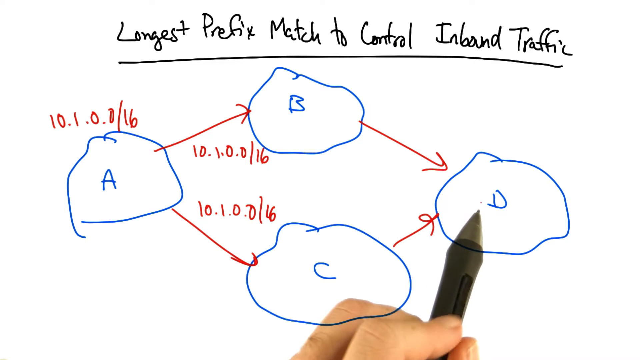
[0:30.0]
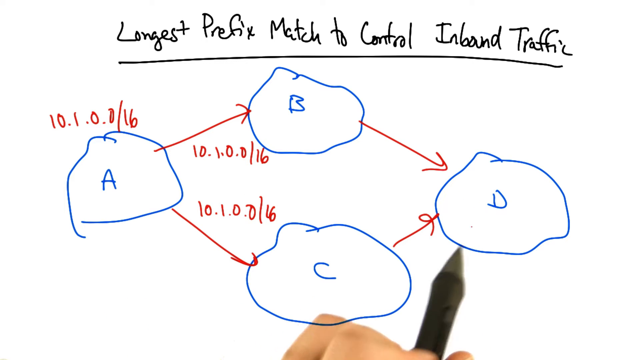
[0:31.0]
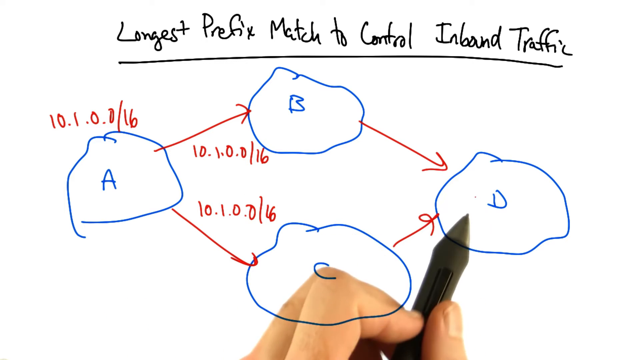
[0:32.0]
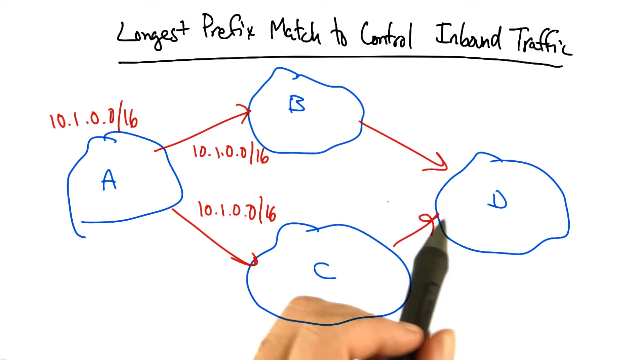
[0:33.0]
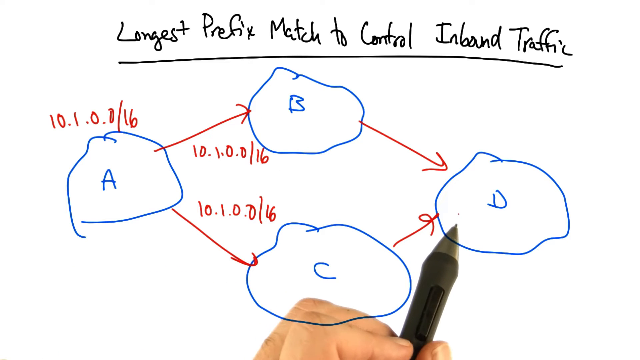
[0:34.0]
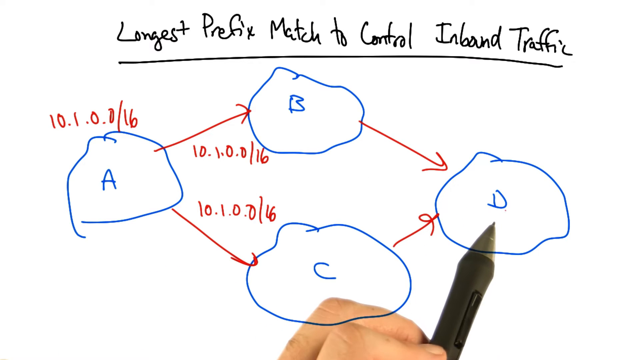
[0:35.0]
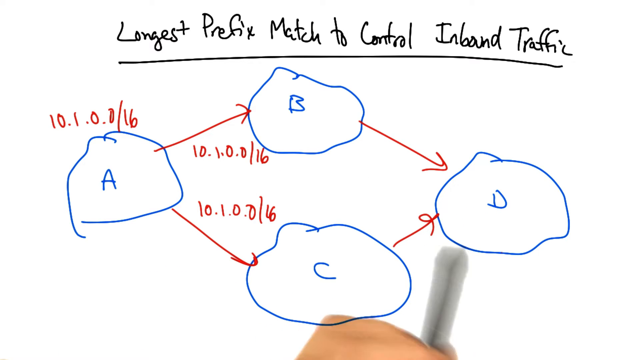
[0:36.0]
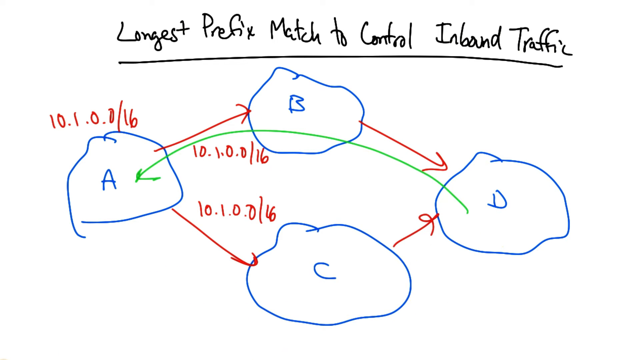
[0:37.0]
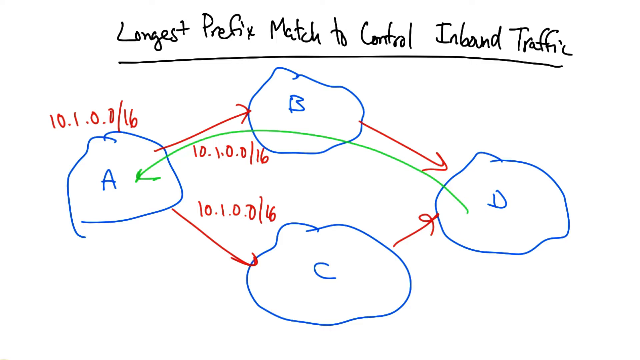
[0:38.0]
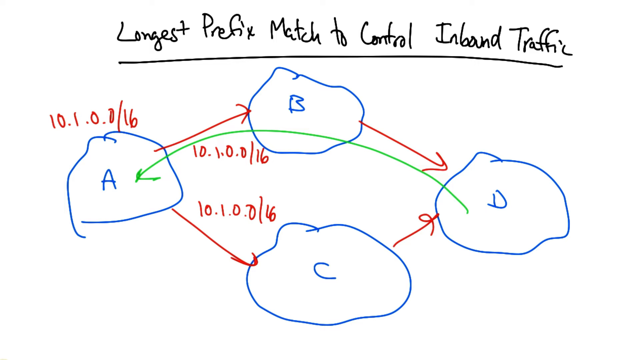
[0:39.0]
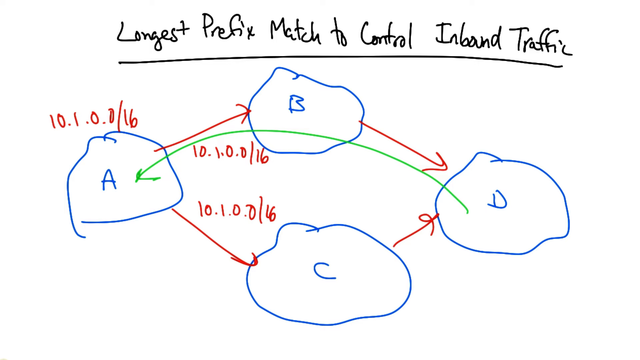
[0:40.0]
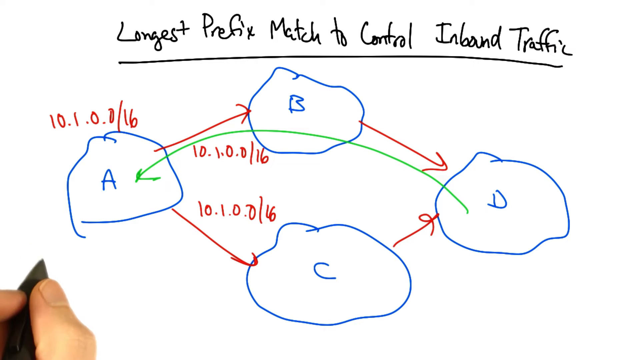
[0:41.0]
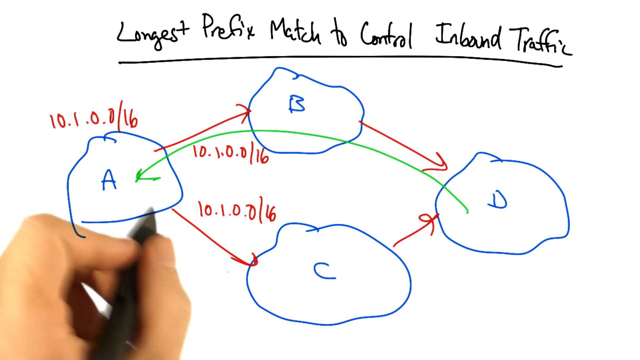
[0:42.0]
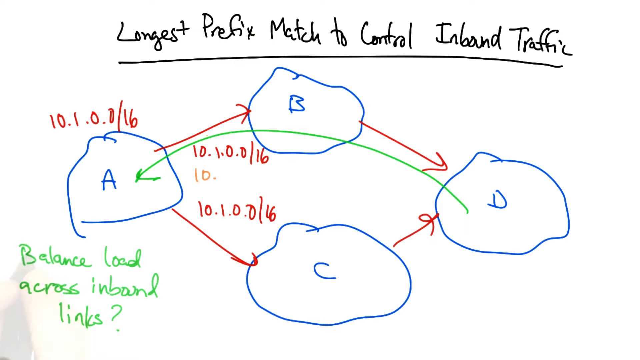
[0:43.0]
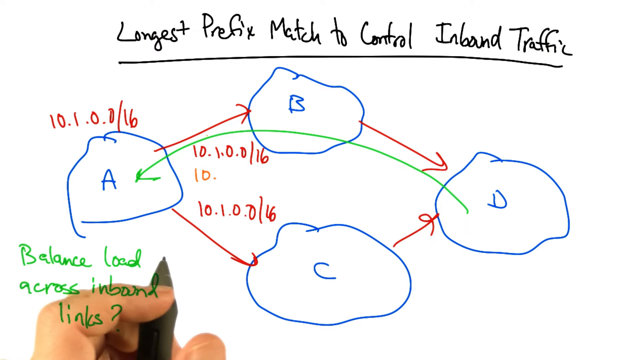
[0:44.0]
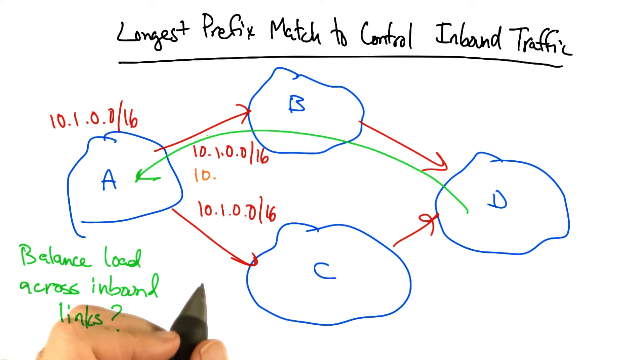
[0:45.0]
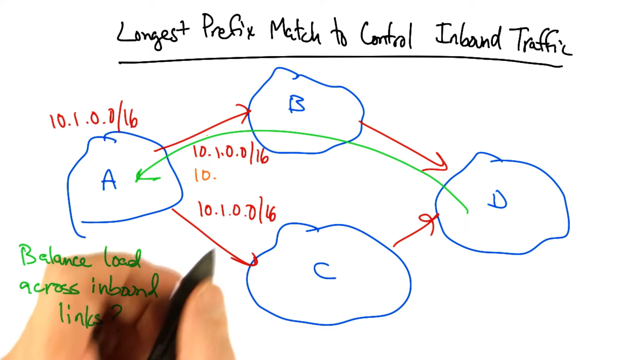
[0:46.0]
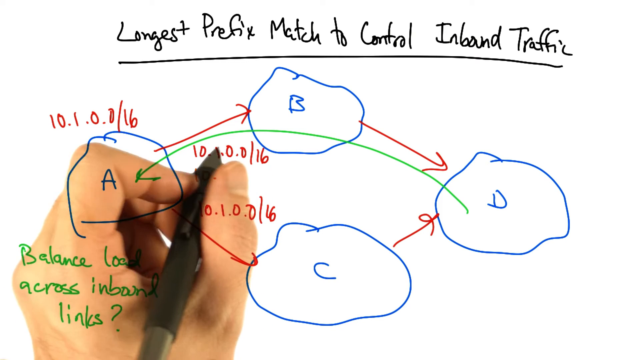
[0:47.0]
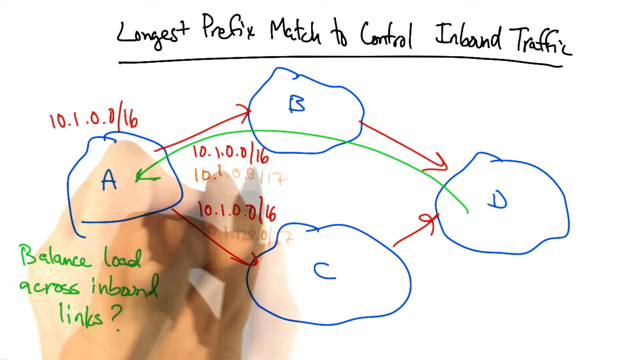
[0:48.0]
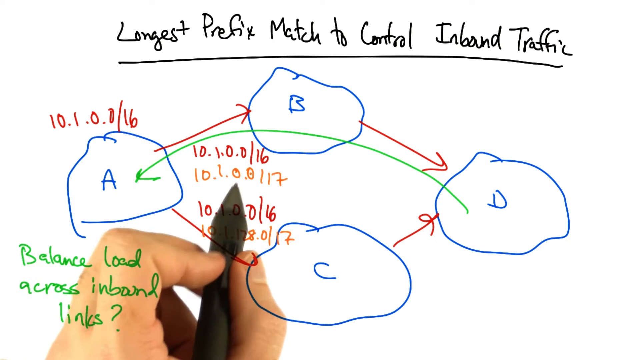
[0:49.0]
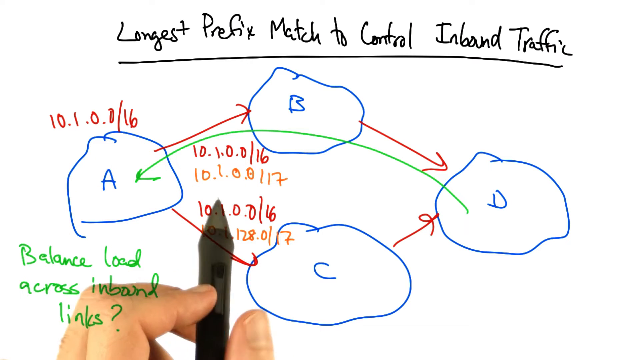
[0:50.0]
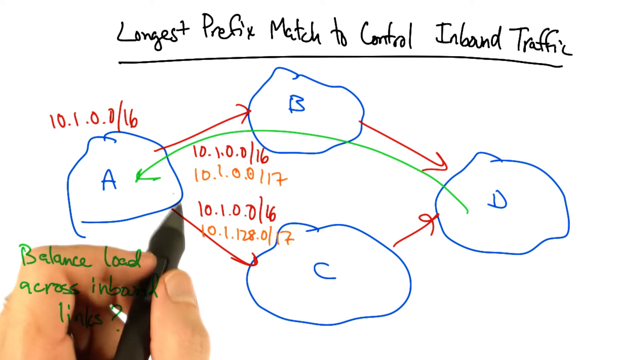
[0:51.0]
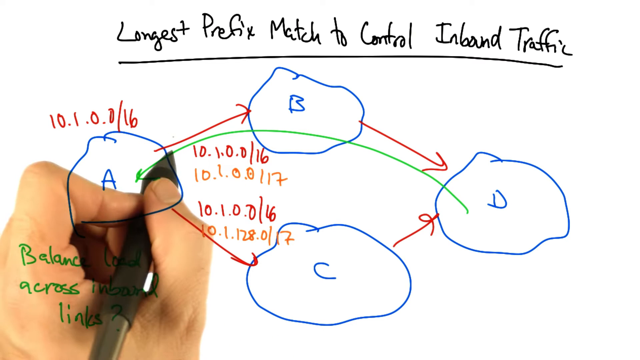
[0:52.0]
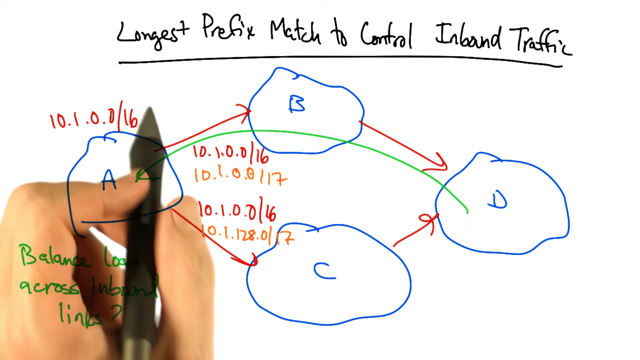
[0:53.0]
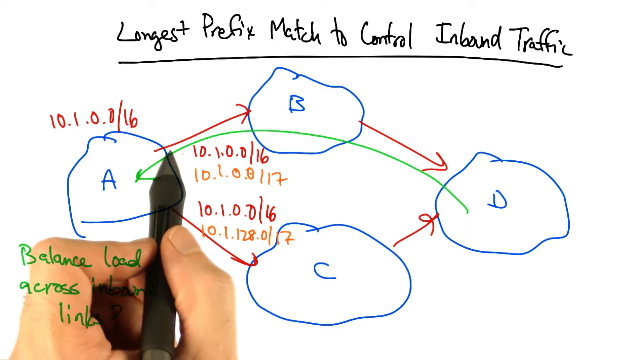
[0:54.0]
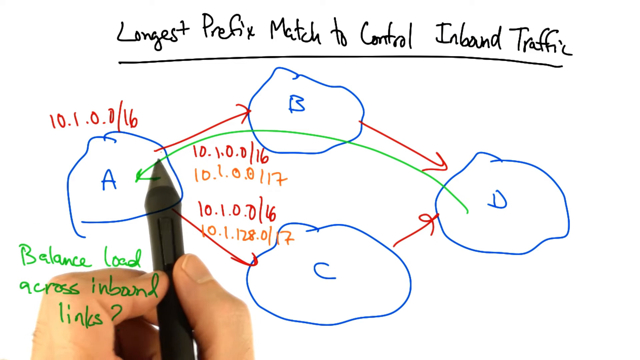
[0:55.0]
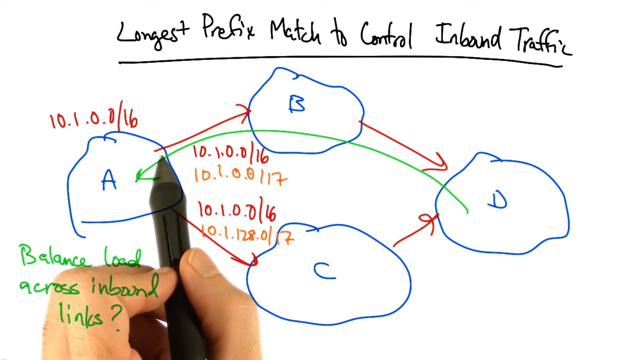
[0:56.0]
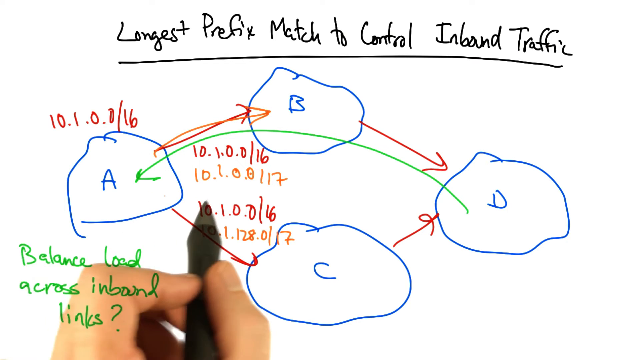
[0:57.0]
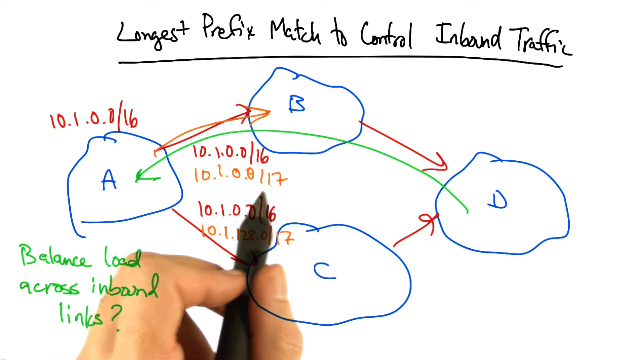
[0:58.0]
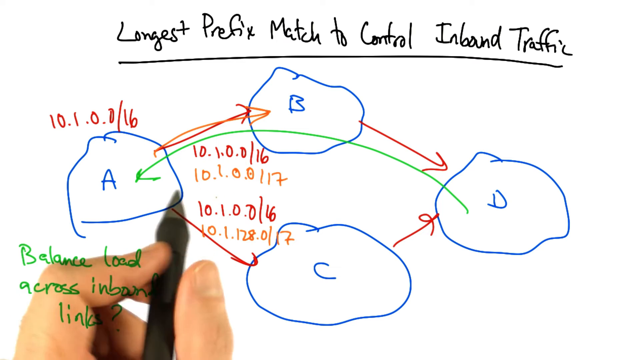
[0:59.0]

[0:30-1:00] The pen points at D. The side of the pointer finger and a little of the middle finger are visible, with the thumb gripping the other side of the black pen; the thumb faces right and the tops of the fingers point up as they grip the back of the pen. The pen moves from D down to C, back to D, over to A and back to D, then draws a green arrow from D all the way over to A. Just below A on the left it writes "balance load across inbound links?" Next, under the arrow between B and A, more numbers are written in orange, and more orange numbers are written along the path from A to C. The pen holds at A for a moment, then draws a second arrow up to B and a second arrow down to C, both red.